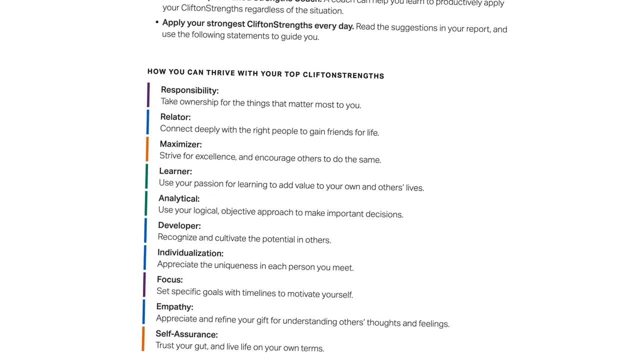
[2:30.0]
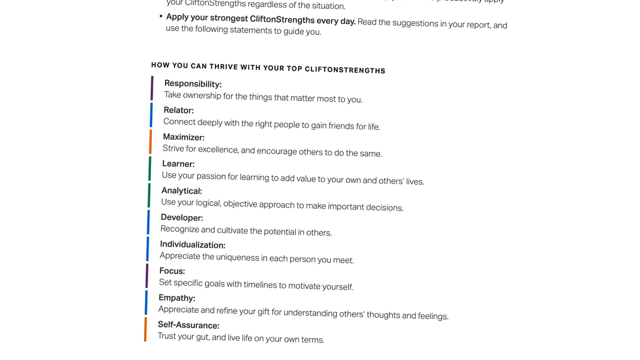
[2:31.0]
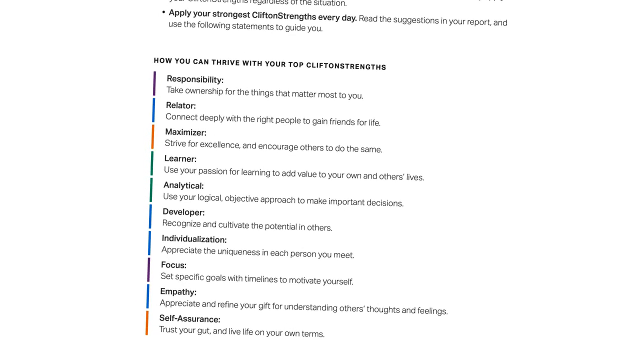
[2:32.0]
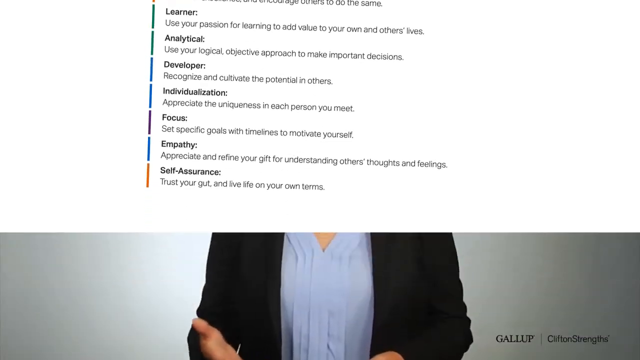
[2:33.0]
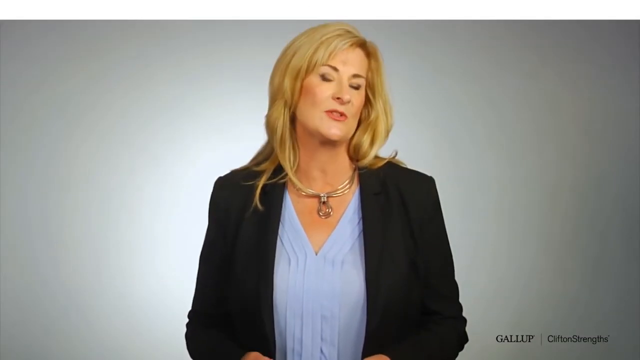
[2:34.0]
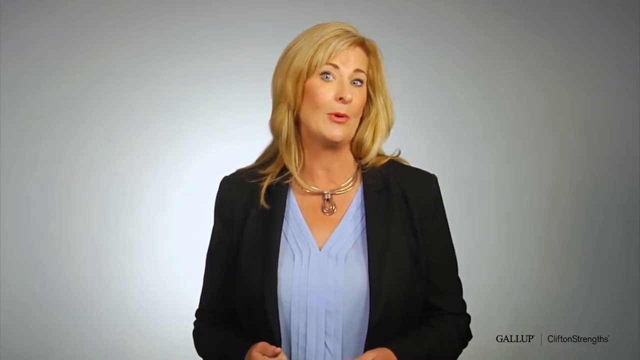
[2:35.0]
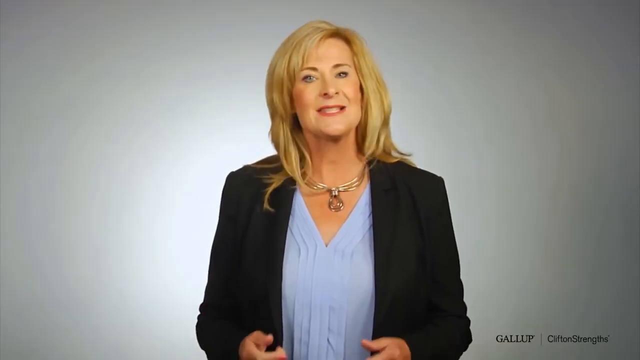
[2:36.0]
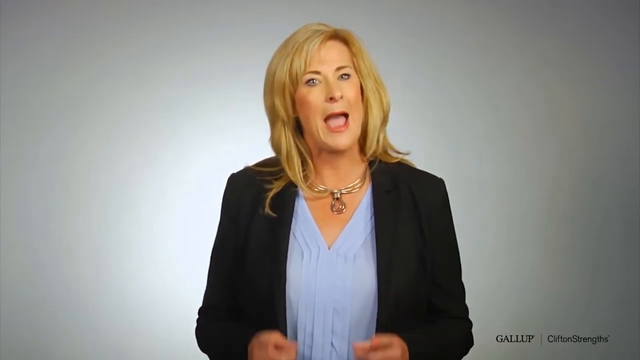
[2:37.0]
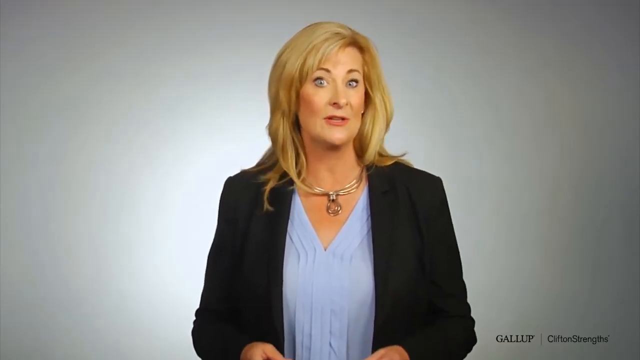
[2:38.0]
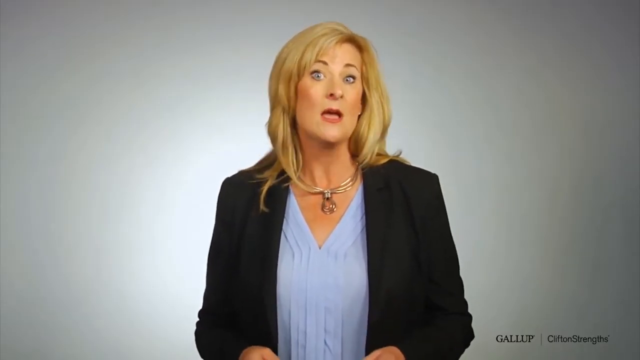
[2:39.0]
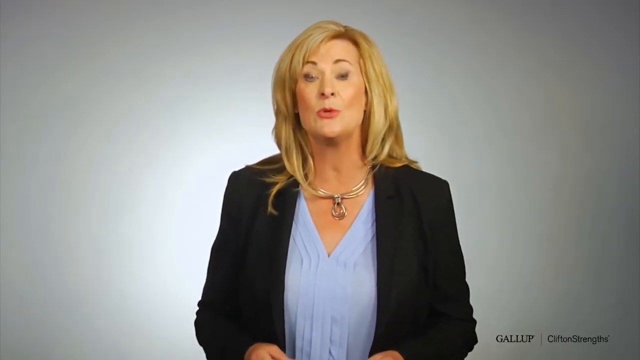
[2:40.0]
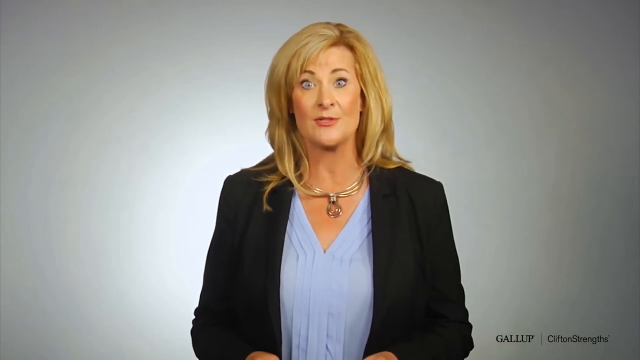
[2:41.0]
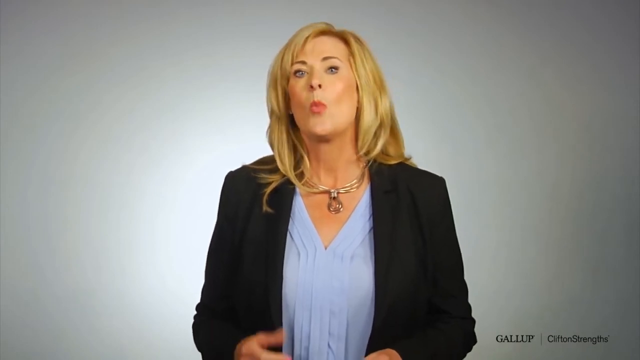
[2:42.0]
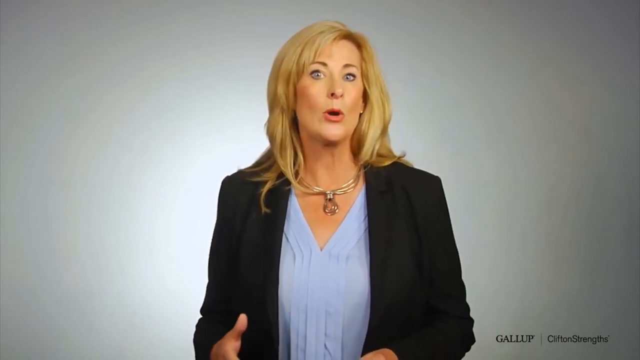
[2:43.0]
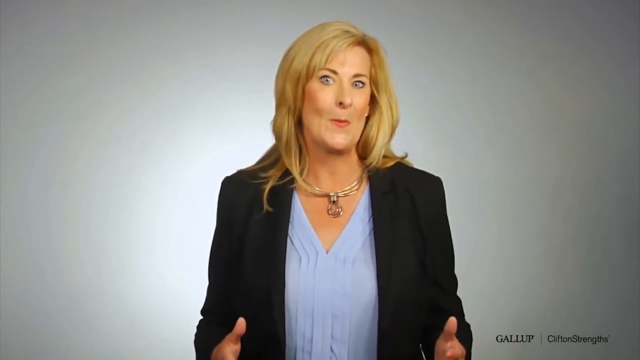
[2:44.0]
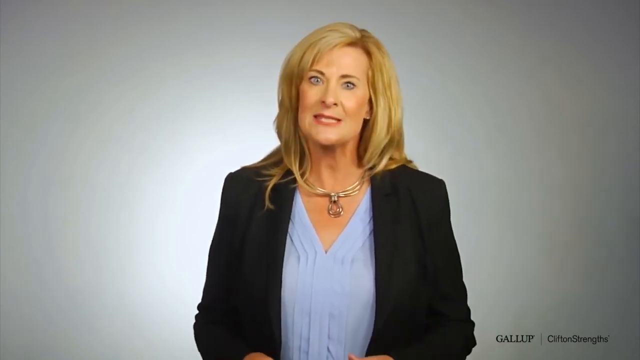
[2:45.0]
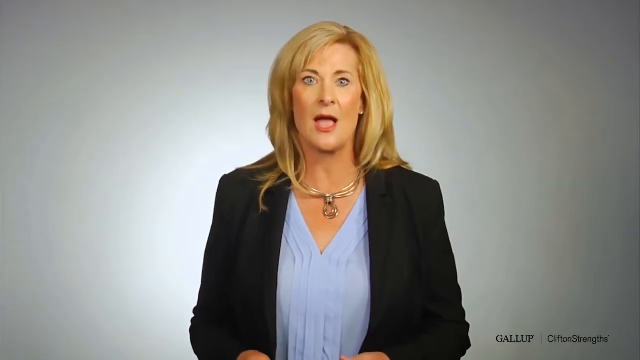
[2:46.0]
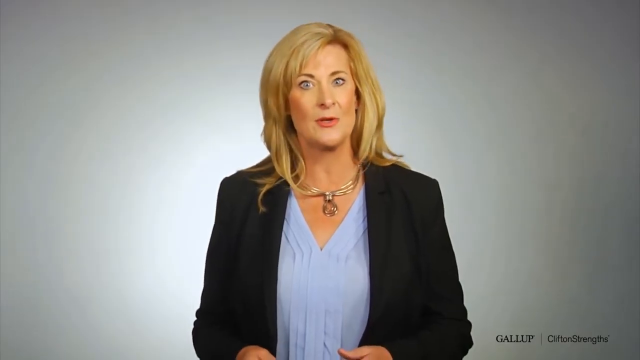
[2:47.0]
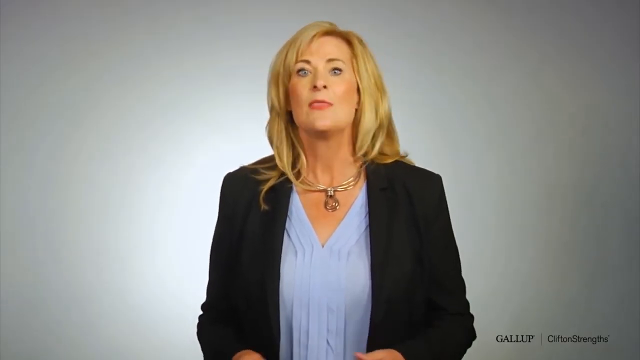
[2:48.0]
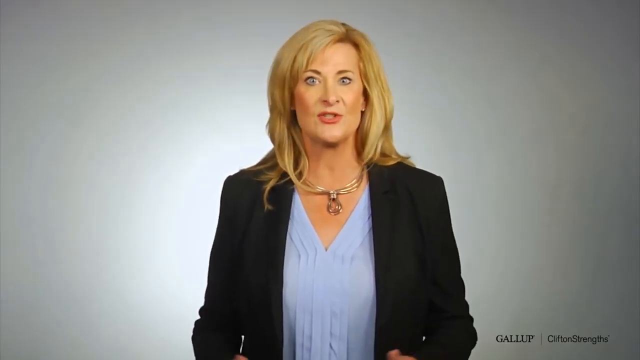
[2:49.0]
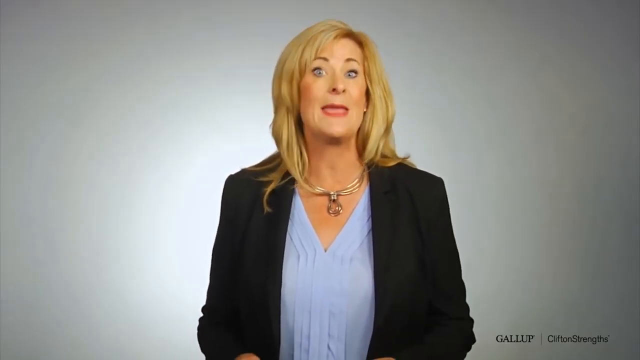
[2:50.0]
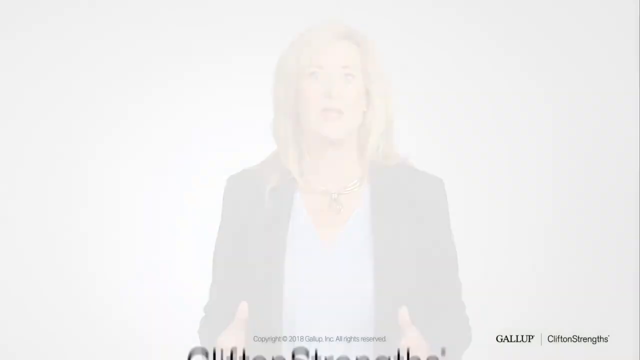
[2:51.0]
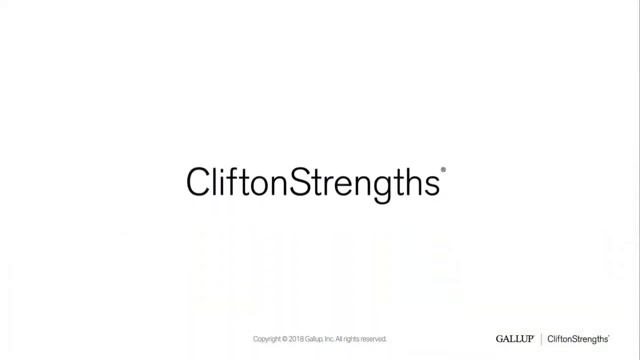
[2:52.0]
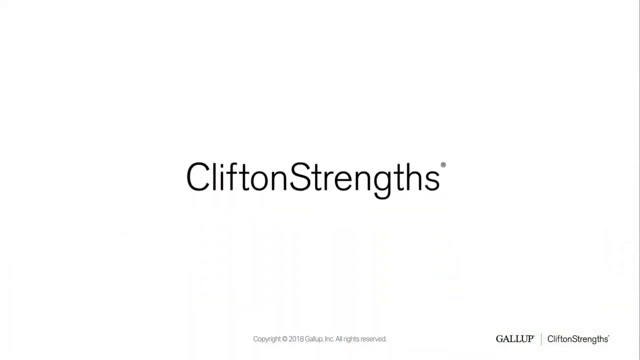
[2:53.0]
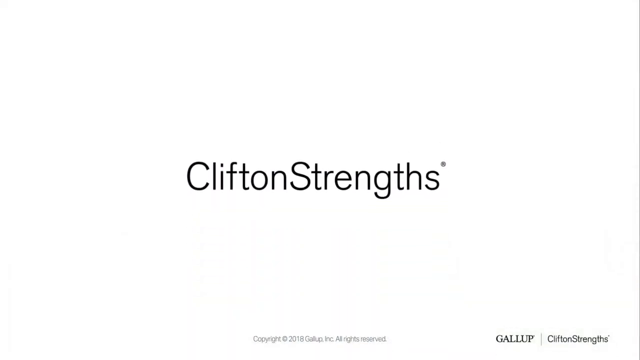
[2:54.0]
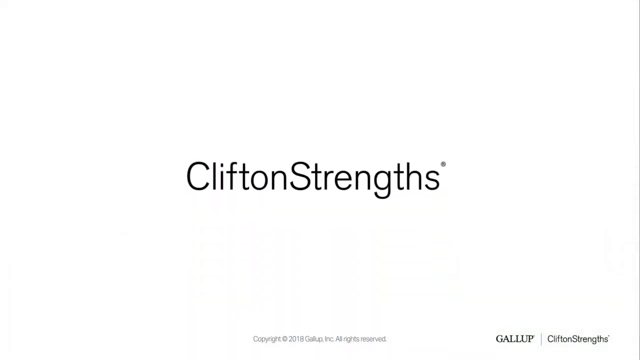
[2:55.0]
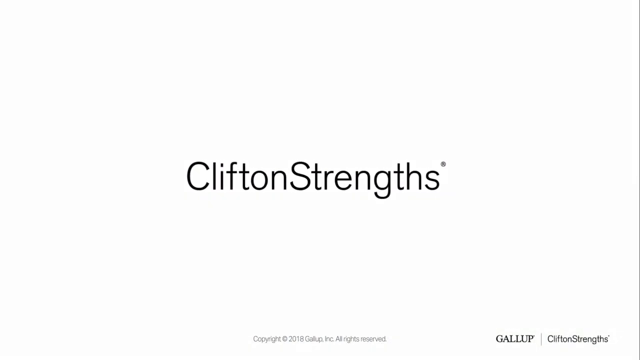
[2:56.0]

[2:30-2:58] The woman is back on screen talking. She wears a black sort of blazer coat, a purple shirt and a necklace. Only she appears until she disappears, after which a white screen says "CliftonStrengths" with a registered trademark mark next to the name.